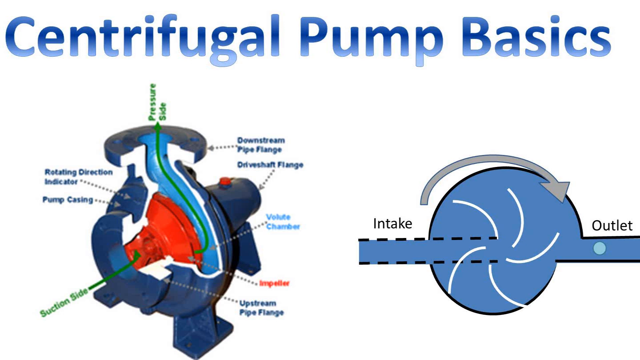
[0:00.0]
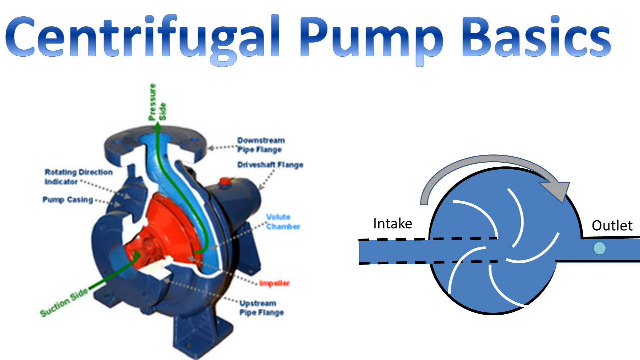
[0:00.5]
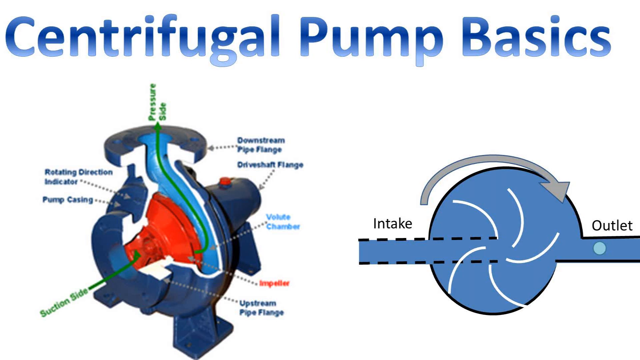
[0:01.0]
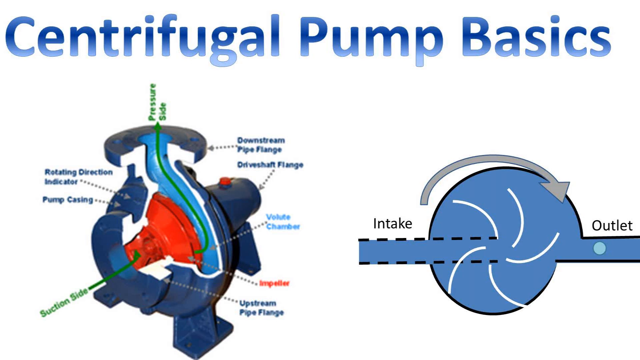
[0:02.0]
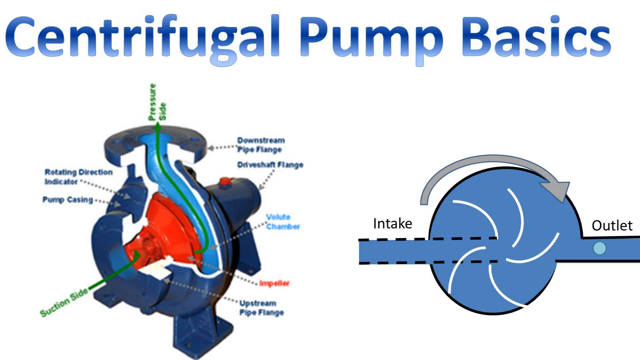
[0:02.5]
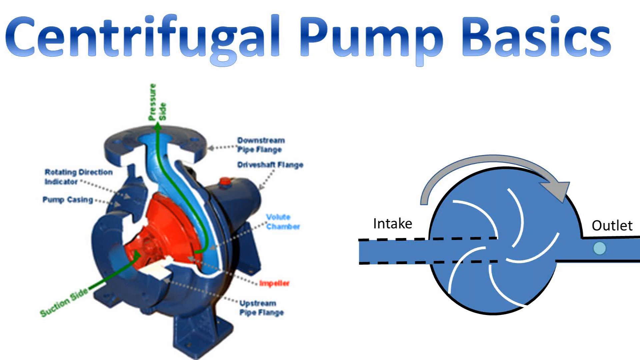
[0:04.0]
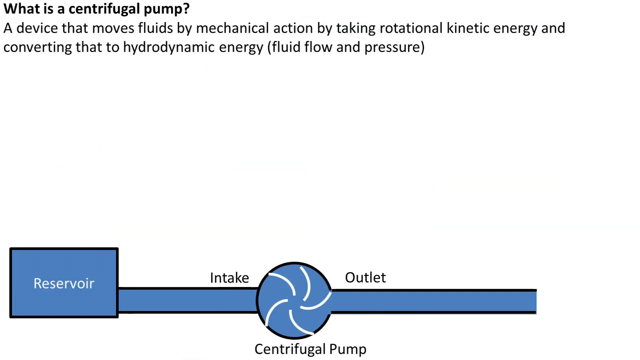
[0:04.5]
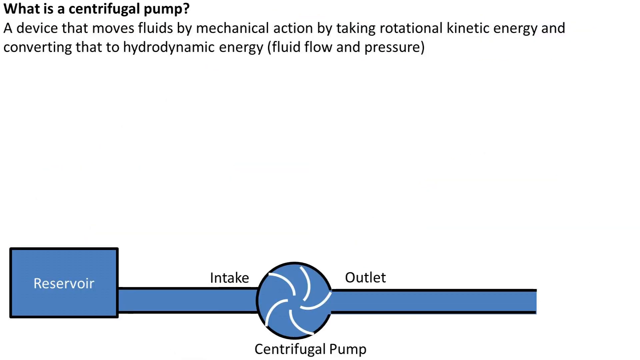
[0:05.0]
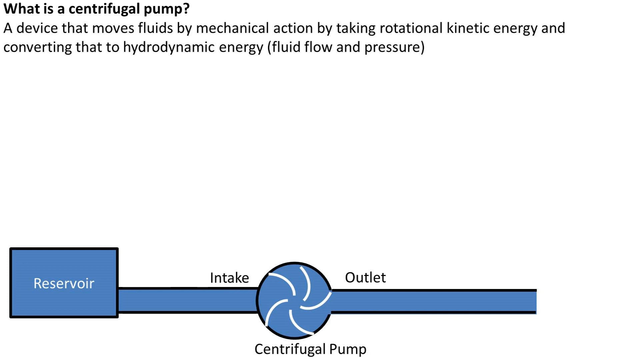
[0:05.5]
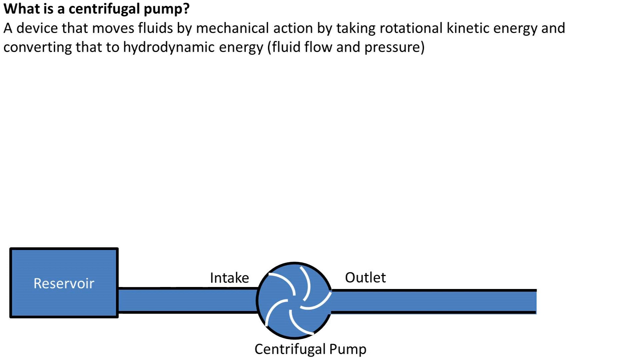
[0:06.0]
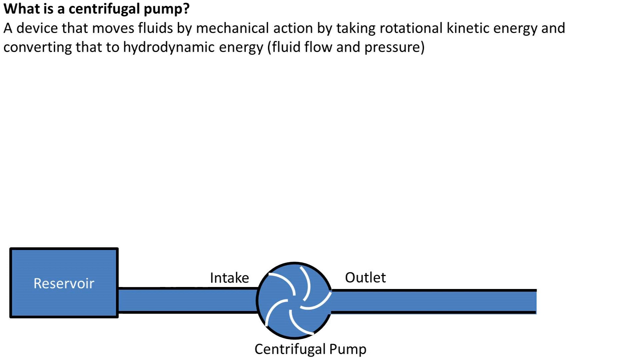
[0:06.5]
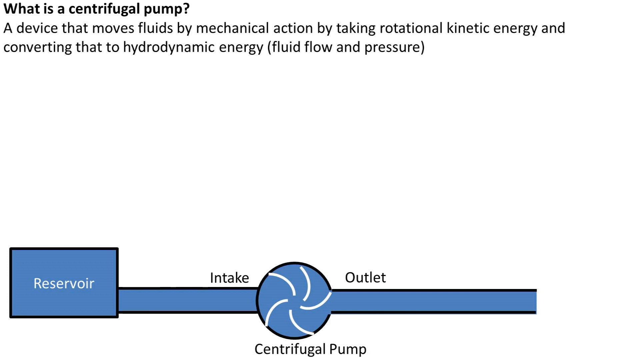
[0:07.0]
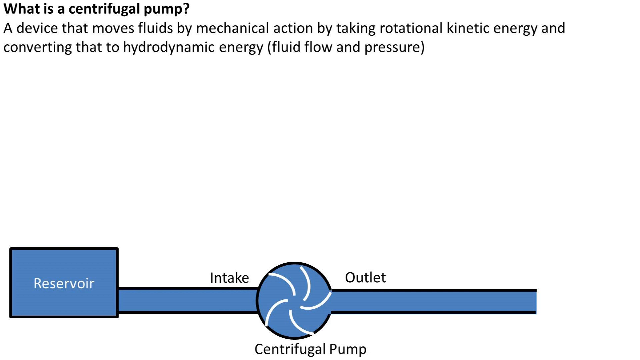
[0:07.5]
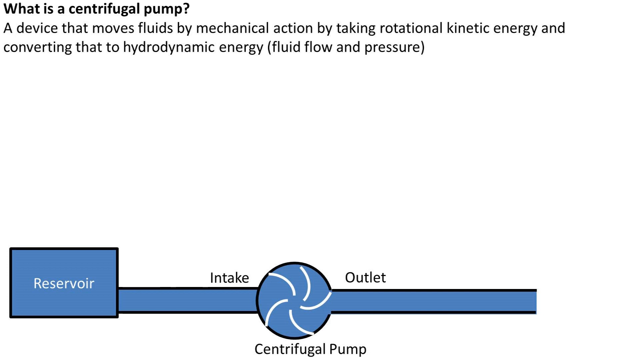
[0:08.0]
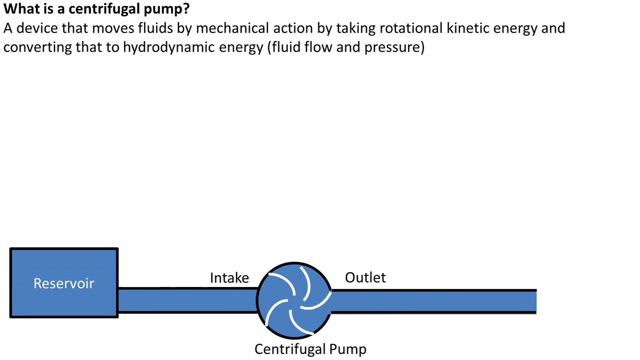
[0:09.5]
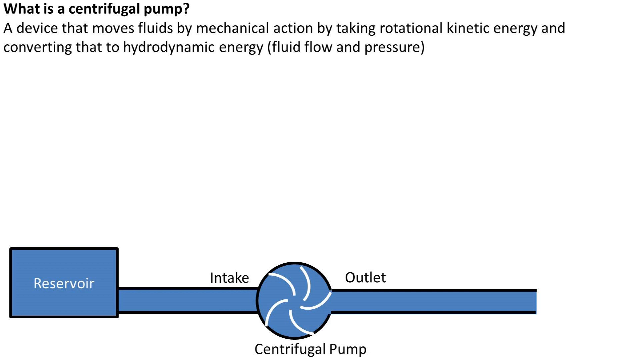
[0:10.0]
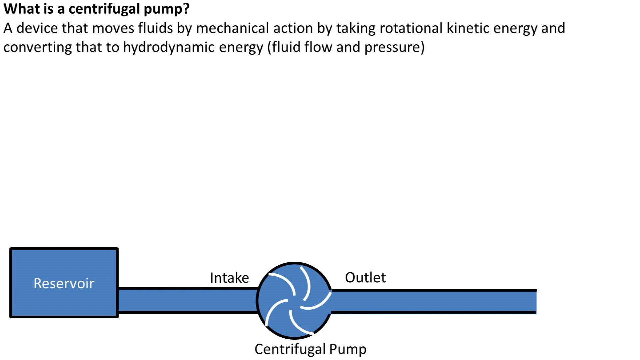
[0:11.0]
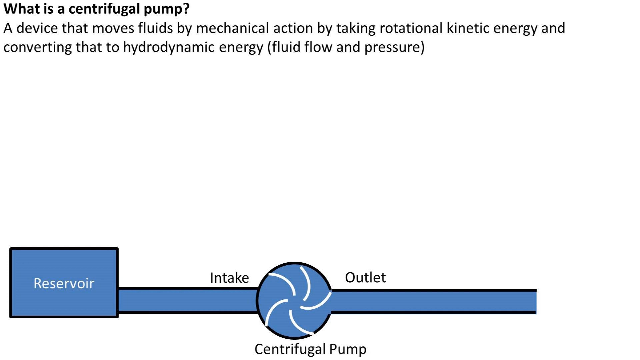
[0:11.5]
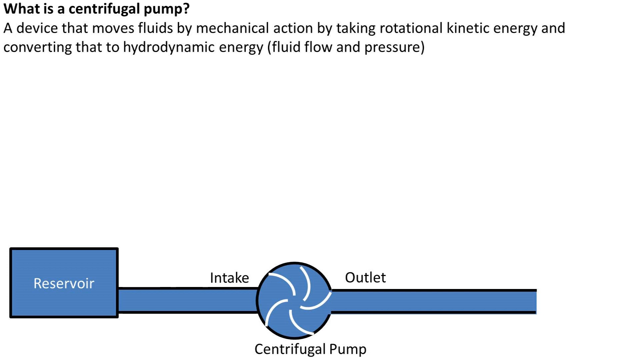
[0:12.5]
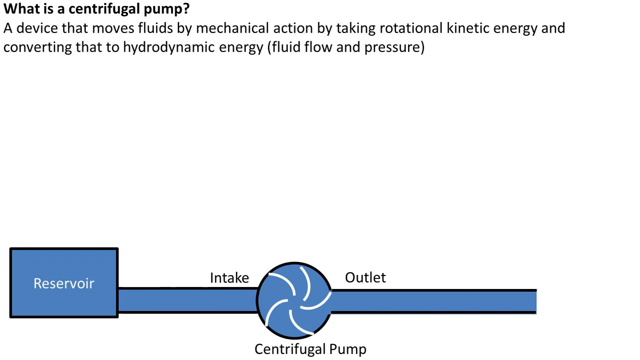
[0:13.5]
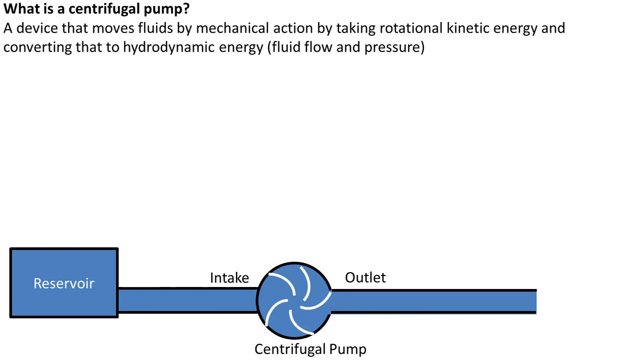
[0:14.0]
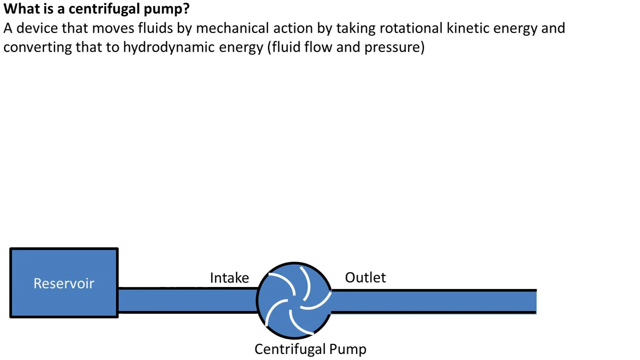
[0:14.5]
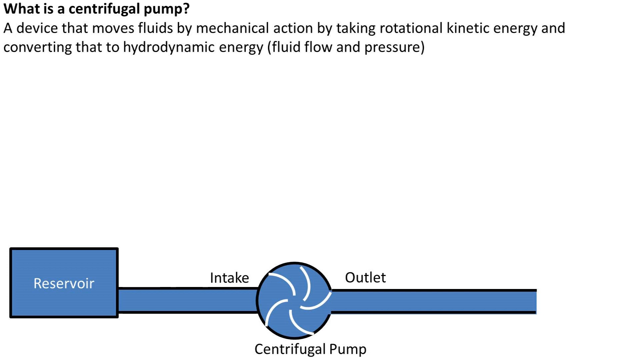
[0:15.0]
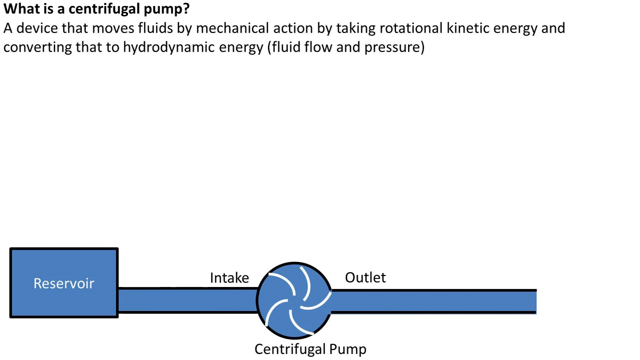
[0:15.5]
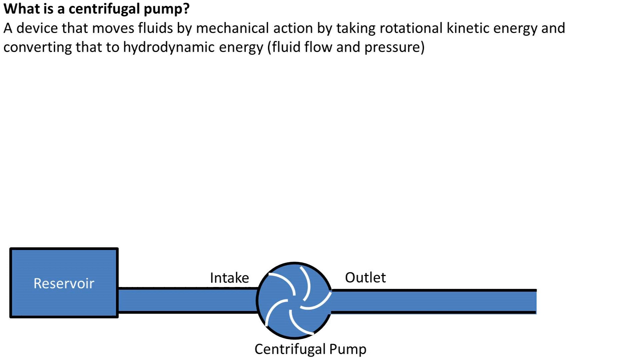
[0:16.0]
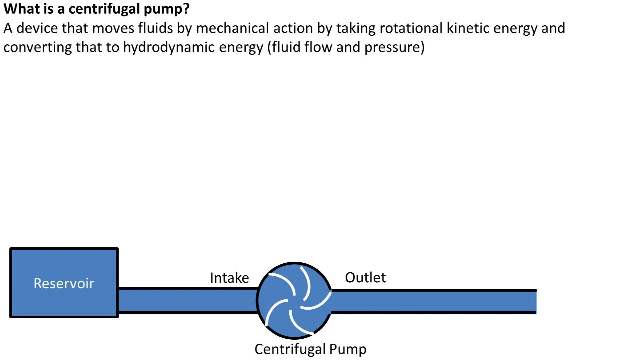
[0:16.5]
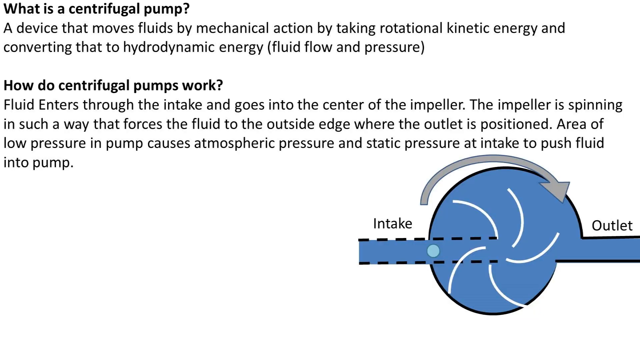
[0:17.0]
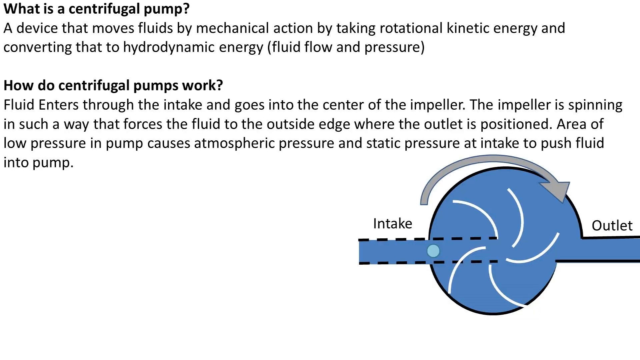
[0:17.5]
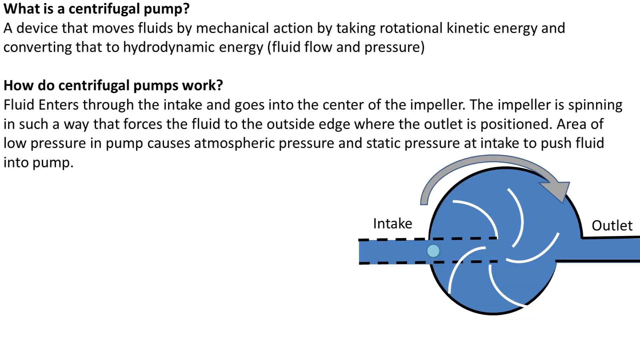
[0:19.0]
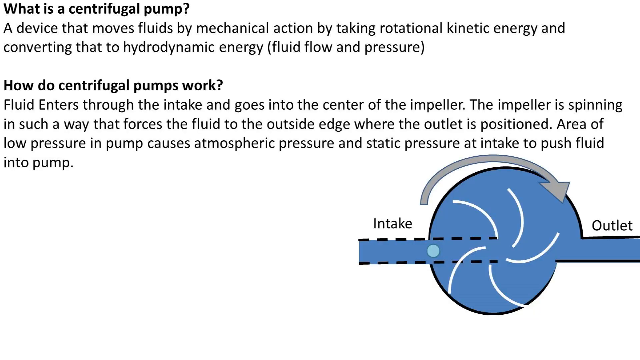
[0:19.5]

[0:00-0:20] A white background shows a 2D diagram of a pump, with the intake and outlet on the right. The pump is blue and has black lines curling above and below it, with a gray arrow forming clockwise to indicate the direction the pressure is going. On the left is a more detailed view of a centrifugal pump, with a picture of a blue connecting piece that joins its parts; the labeled parts include a rotating direction indicator and a pump casing. A picture then shows a reservoir with the intake and outlet coming from it.